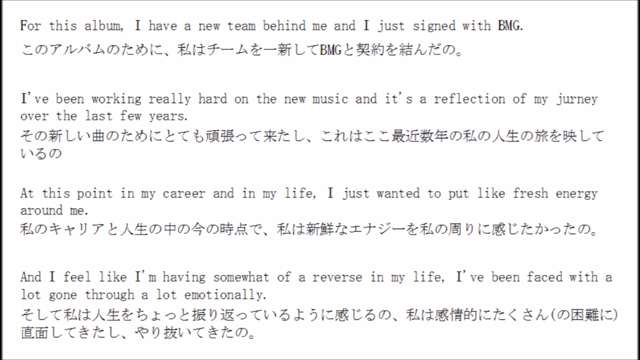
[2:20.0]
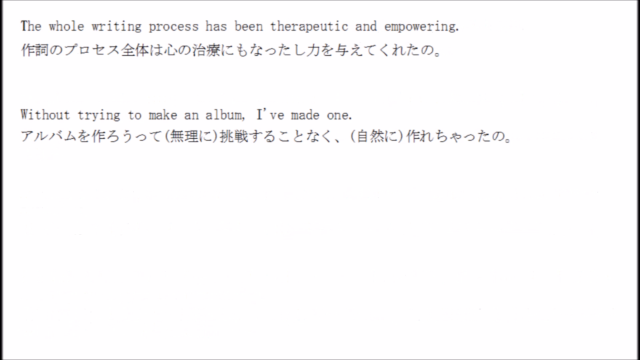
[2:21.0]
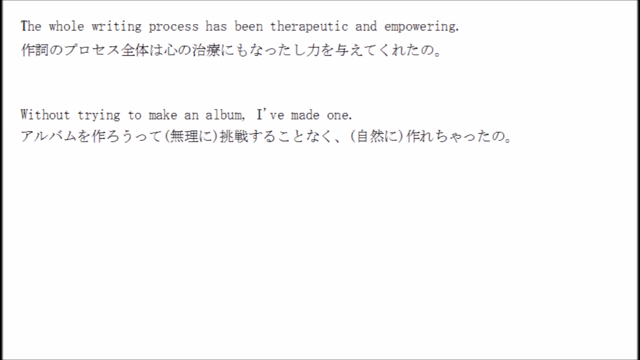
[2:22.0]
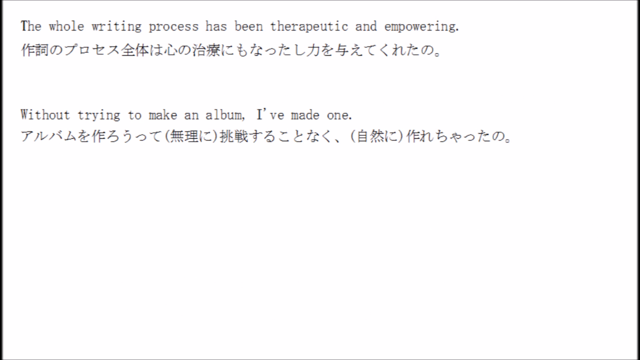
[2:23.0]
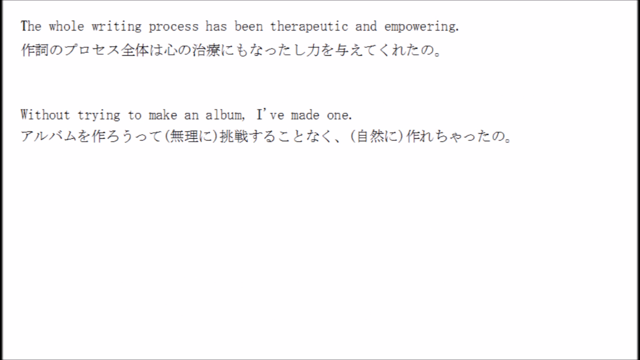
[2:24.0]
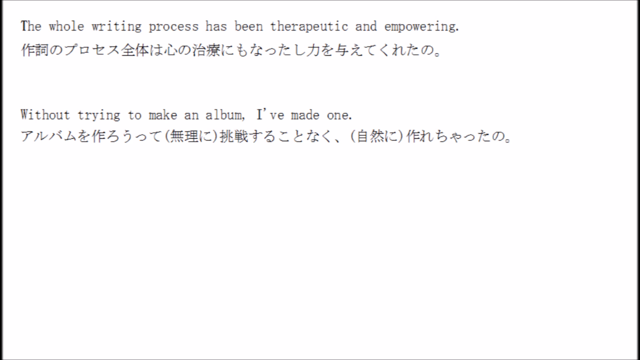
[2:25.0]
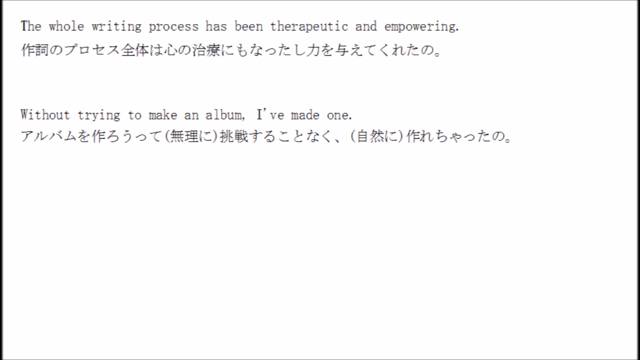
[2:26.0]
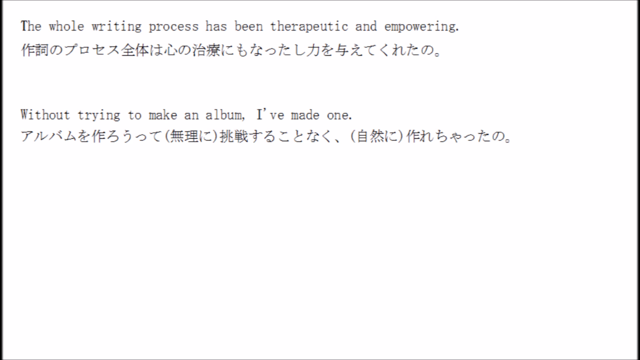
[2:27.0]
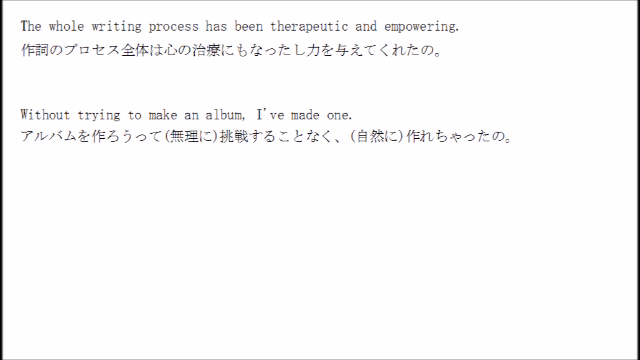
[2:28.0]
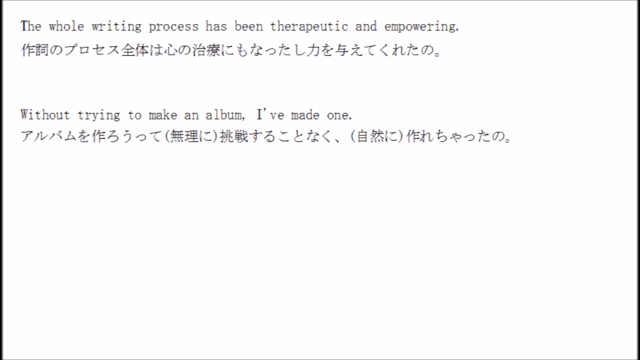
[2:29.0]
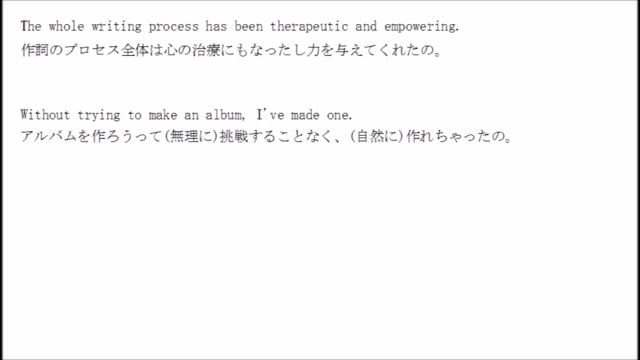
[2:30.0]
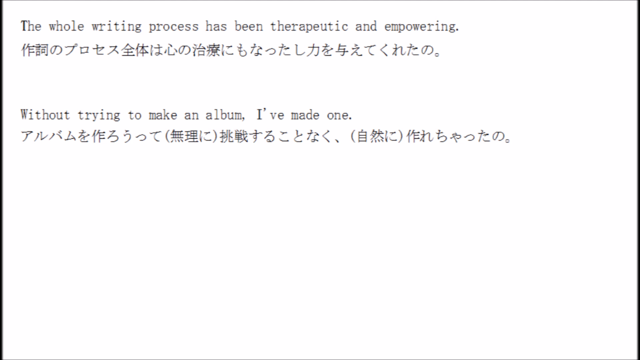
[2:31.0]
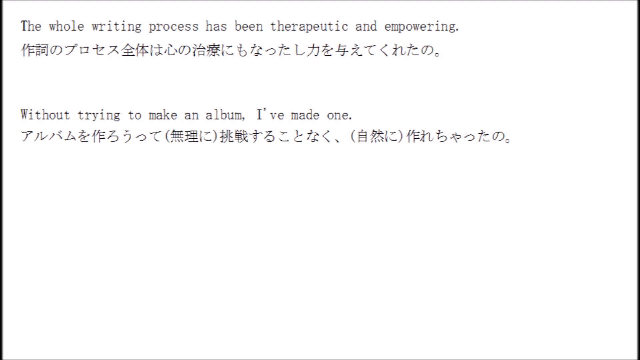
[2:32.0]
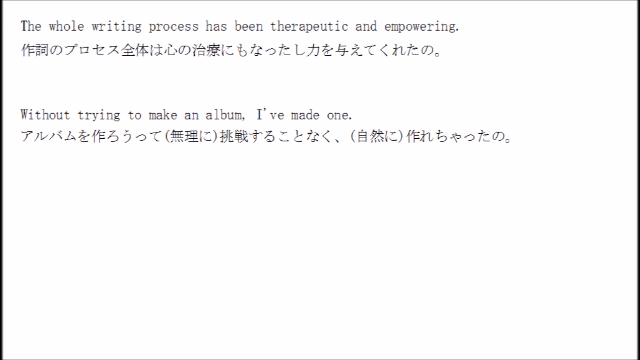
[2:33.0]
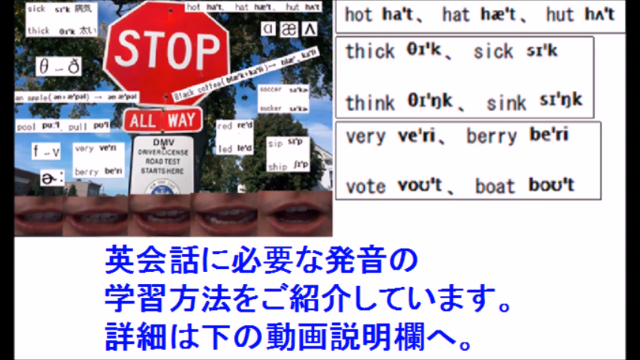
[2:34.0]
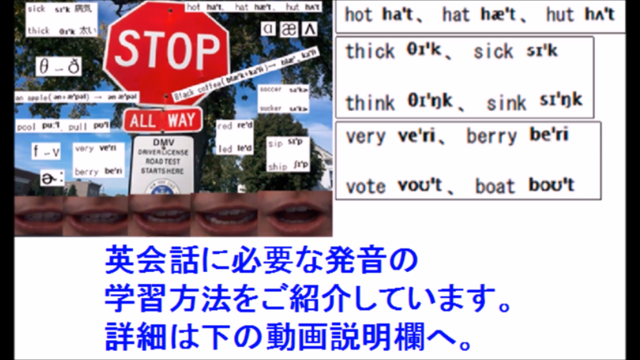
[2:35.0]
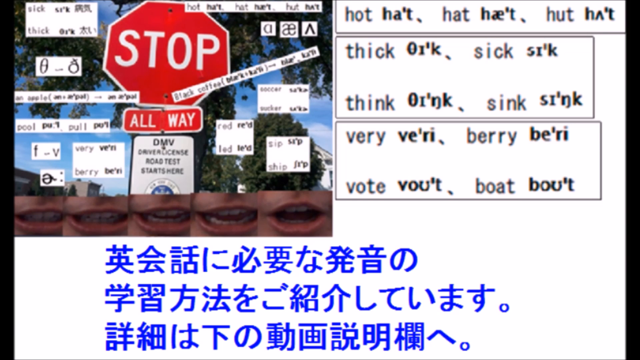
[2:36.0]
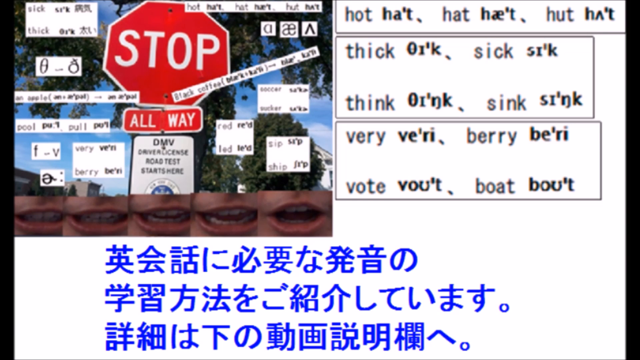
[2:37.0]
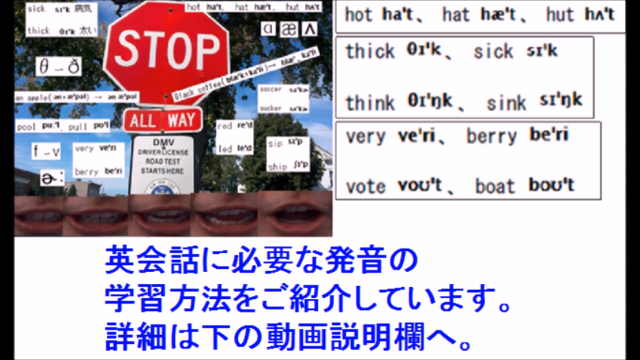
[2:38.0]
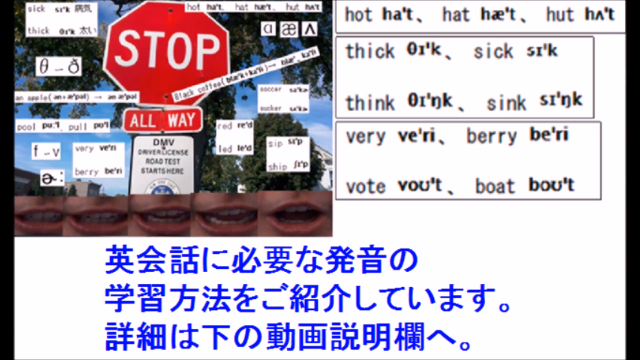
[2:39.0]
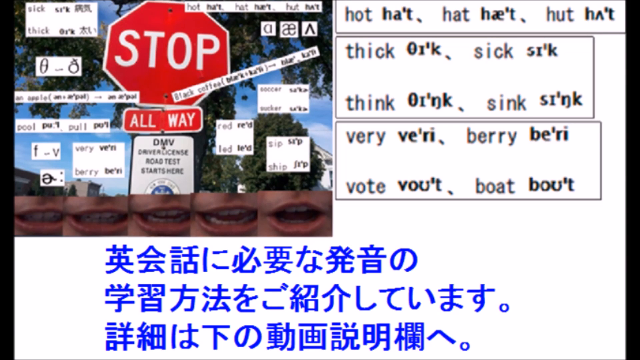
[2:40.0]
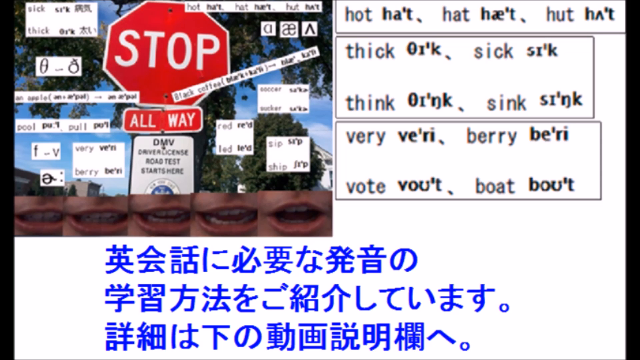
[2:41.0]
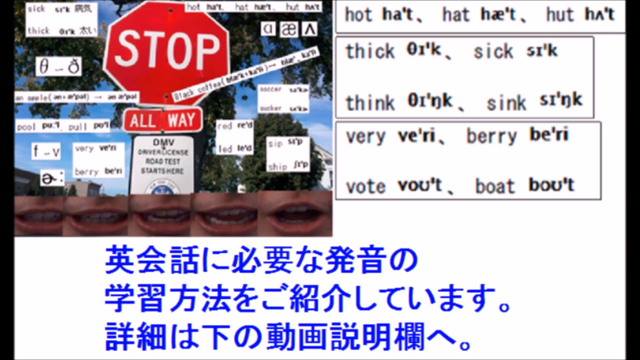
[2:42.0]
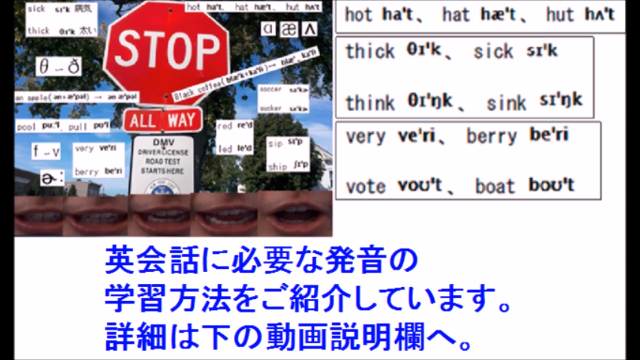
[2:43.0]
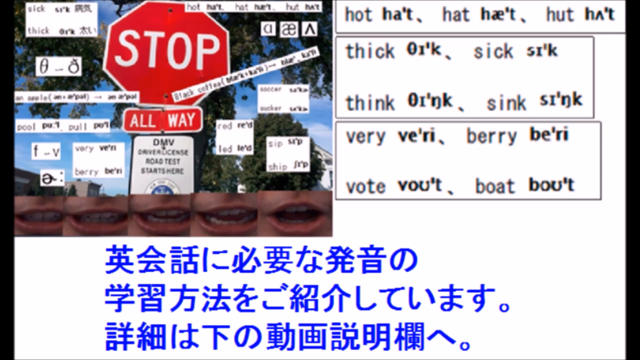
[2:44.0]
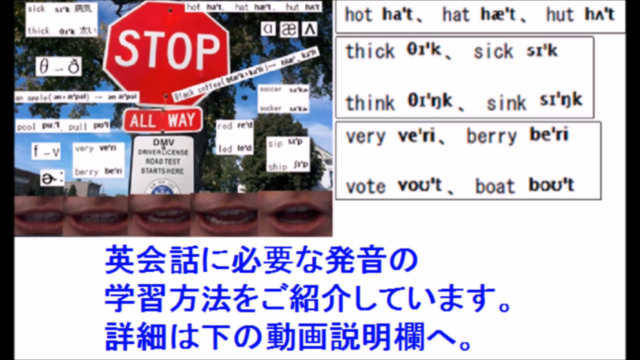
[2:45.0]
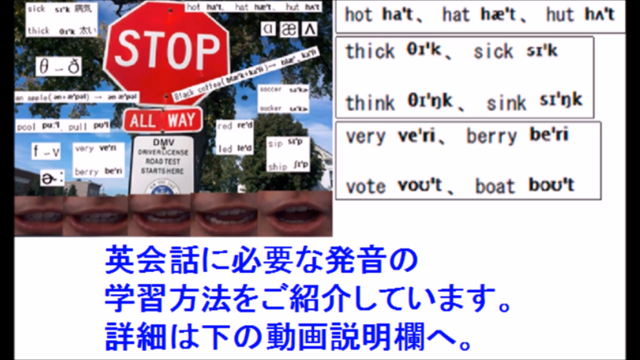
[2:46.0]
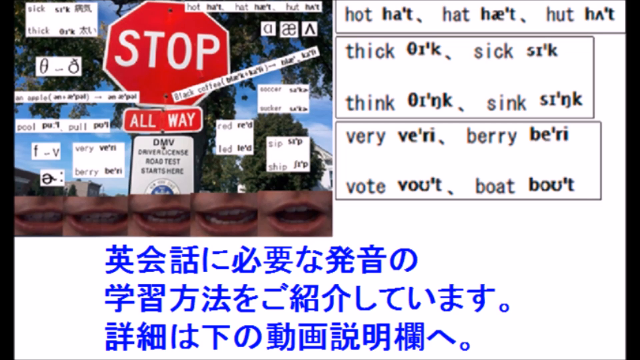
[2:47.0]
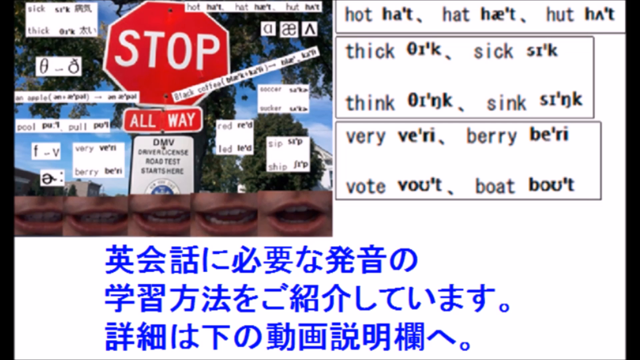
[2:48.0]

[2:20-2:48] Gray text on a white background shows what are perhaps an artist's interview responses, with the English accompanied by a different, non-English language. The English reads: "for this album, I have a new team behind me and I just signed with BMG. I've been working really hard on the new music and it's a reflection of my journey over the last few years. At this point in my career, in my life, I just wanted to put like fresh energy around me and I feel like I'm having somewhat of a reverse in my life. I've been faced with a lot, gone through a lot emotionally." The word "journey" is misspelled. The non-English text uses English for proper nouns, such as BMG, and uses punctuation almost the same as English, with periods and commas, though not everywhere. Next the text reads: "writing process has been therapeutic and empowering without trying to make an album, I've made one." Then comes a still photo of a stop sign, with trees and the sky beyond it, and a sign that says "DMV, driver's license road test starts here". Various English words appear next to a different language. To the right are three text boxes with English-like words, each paired with another language's spelling of the word in English letters; for example, "hot" (H-O-T) is spelled "ha't" (H-A apostrophe T). Symbol-based writing in a different language runs along the bottom of the screen. There are five different shots of a mouth, perhaps pronouncing words.